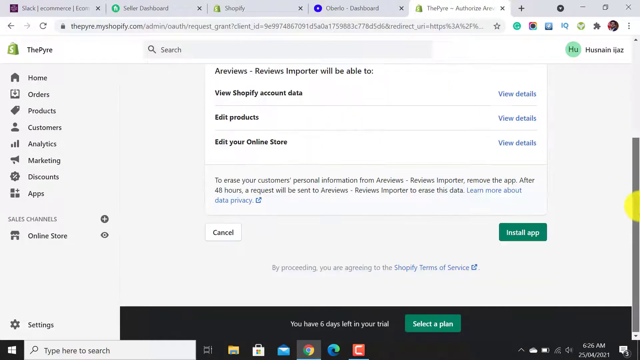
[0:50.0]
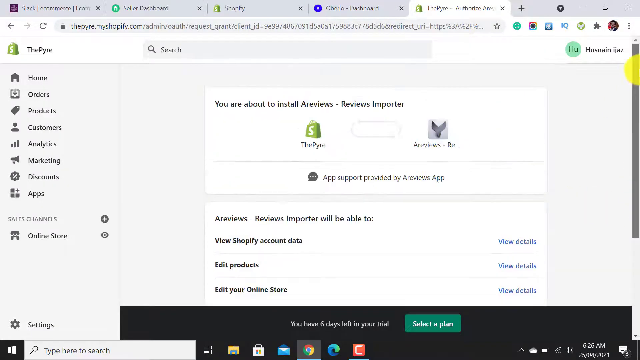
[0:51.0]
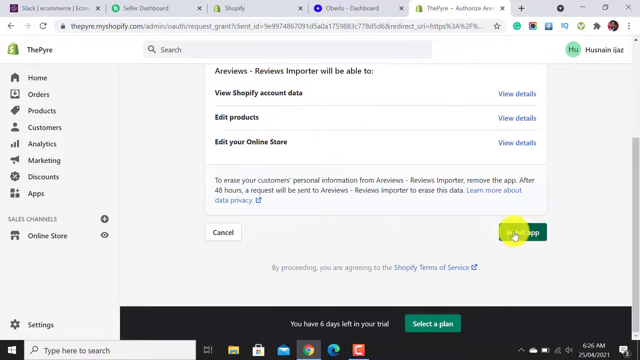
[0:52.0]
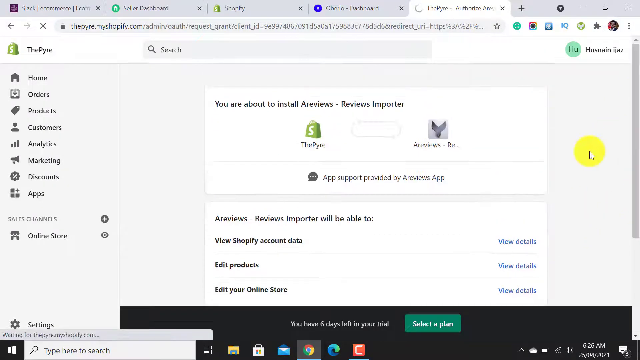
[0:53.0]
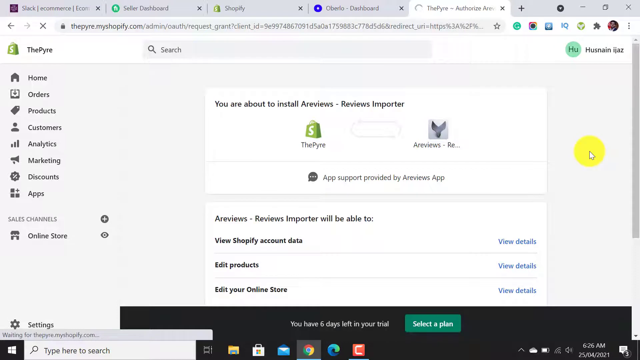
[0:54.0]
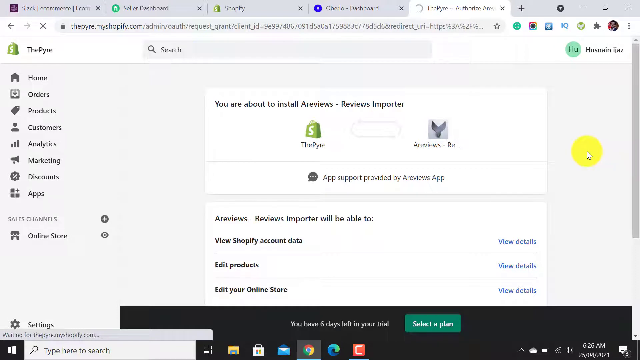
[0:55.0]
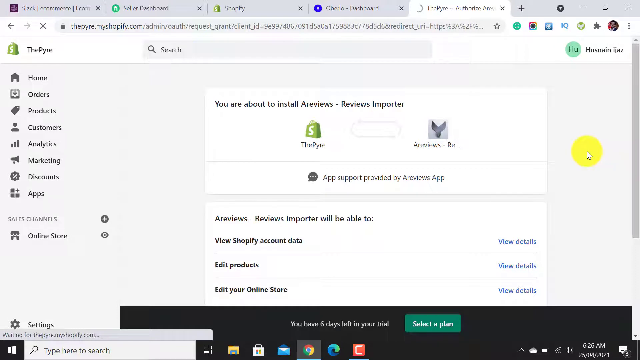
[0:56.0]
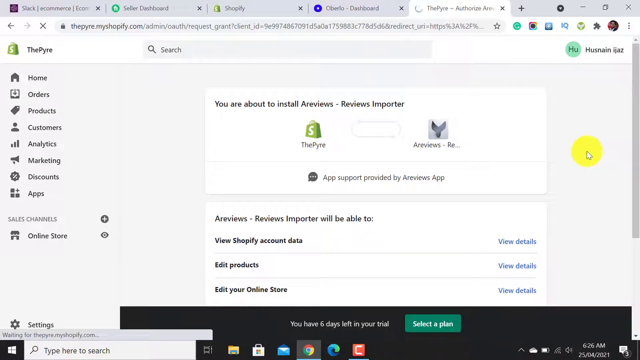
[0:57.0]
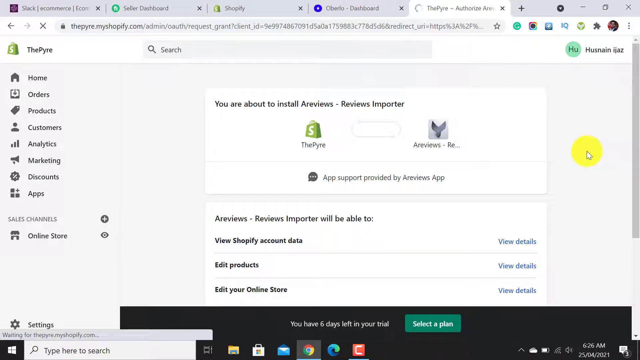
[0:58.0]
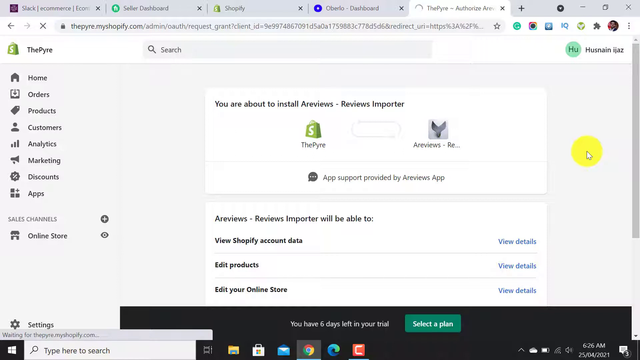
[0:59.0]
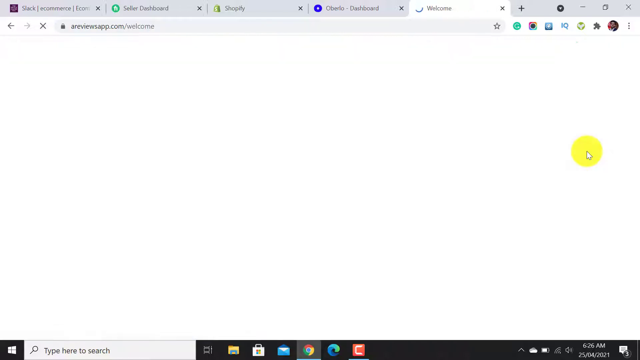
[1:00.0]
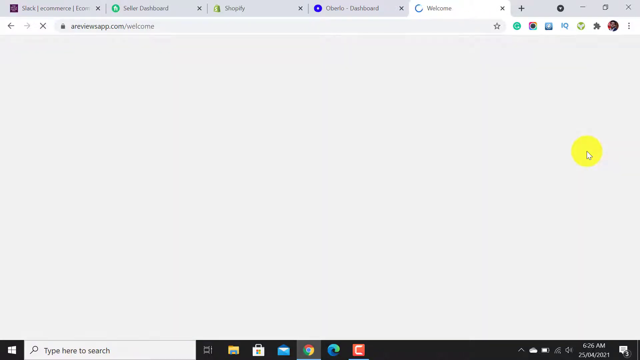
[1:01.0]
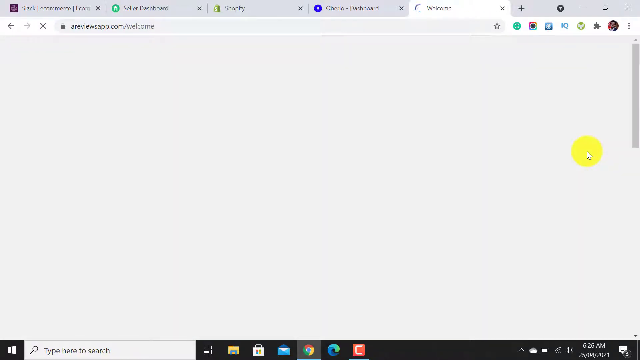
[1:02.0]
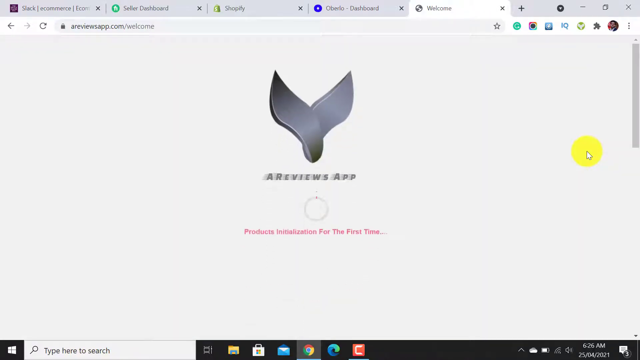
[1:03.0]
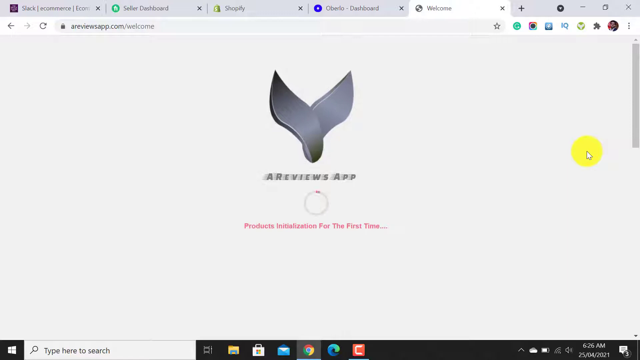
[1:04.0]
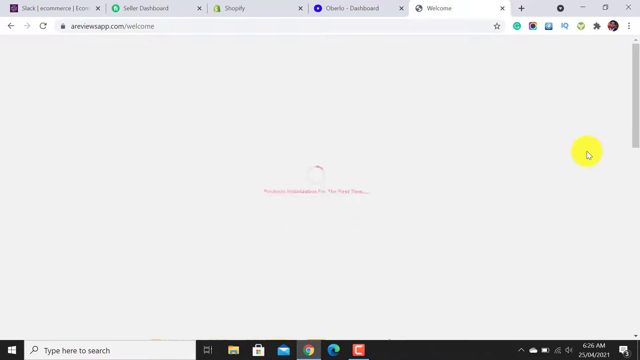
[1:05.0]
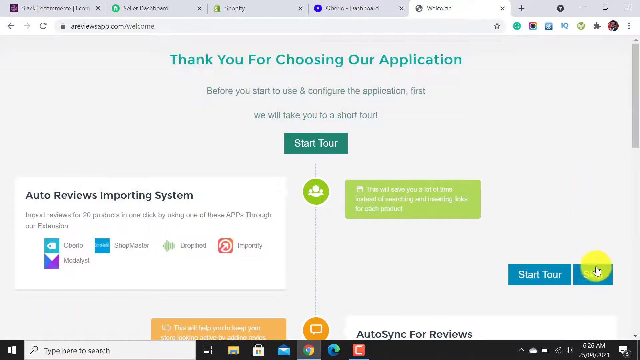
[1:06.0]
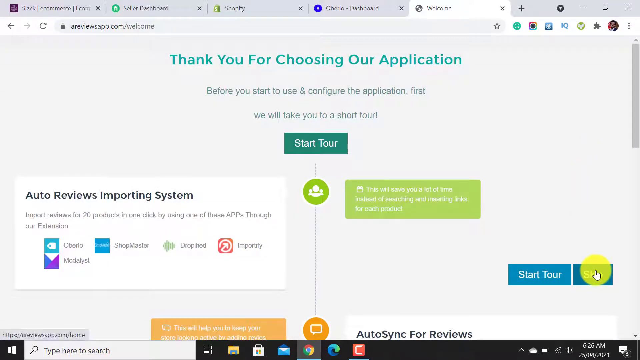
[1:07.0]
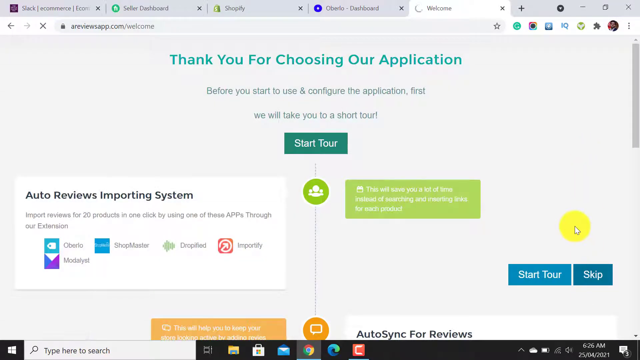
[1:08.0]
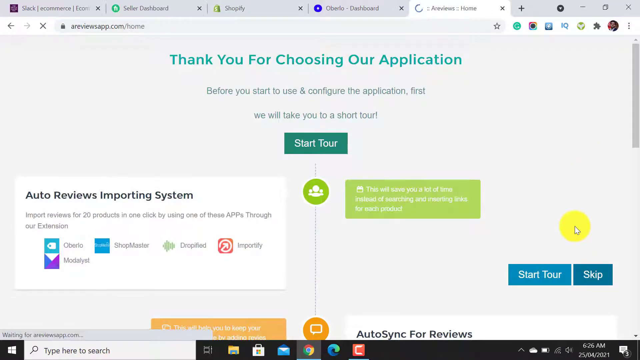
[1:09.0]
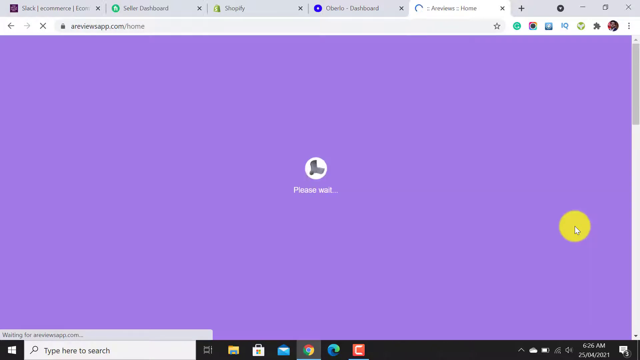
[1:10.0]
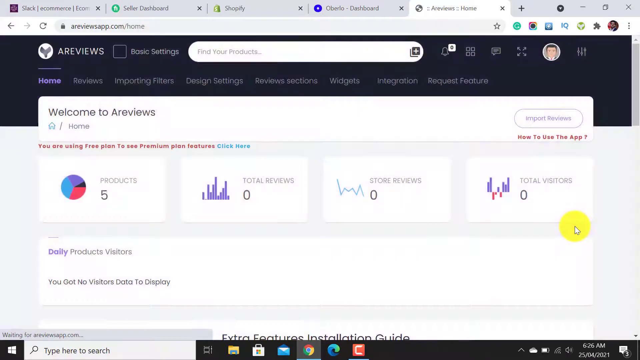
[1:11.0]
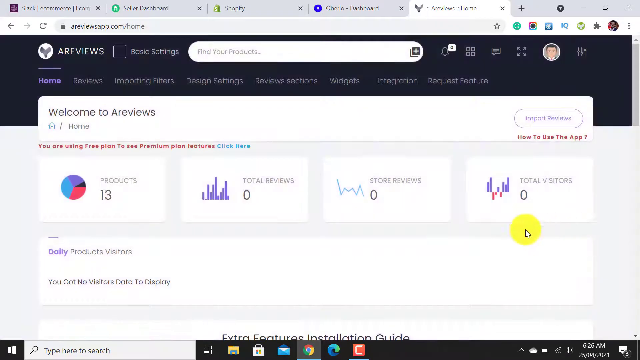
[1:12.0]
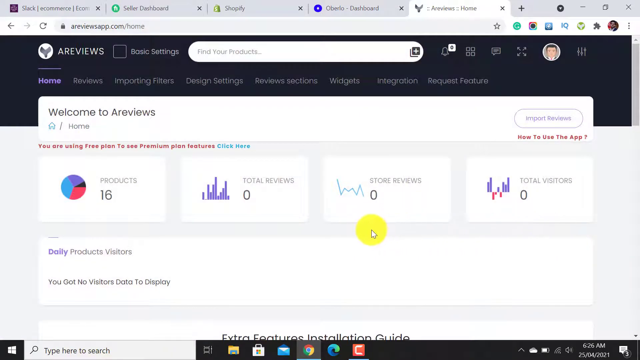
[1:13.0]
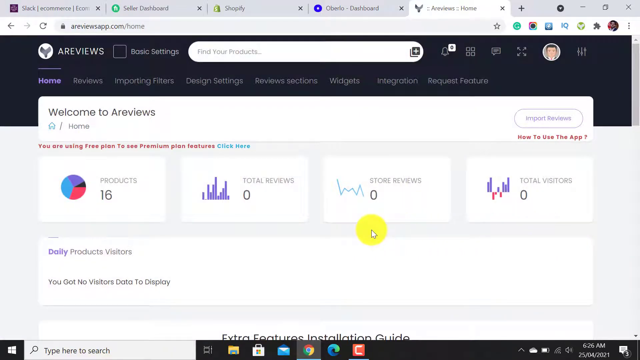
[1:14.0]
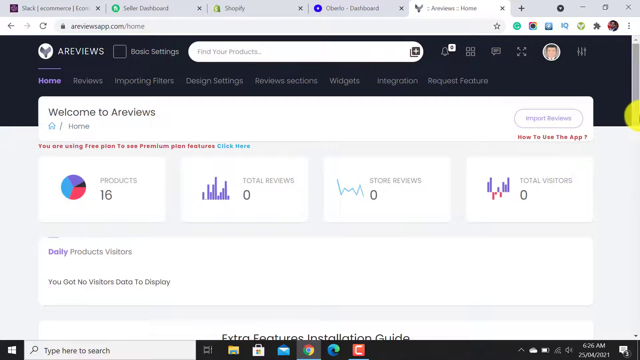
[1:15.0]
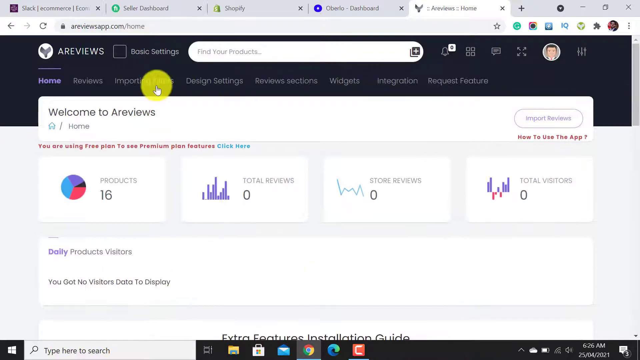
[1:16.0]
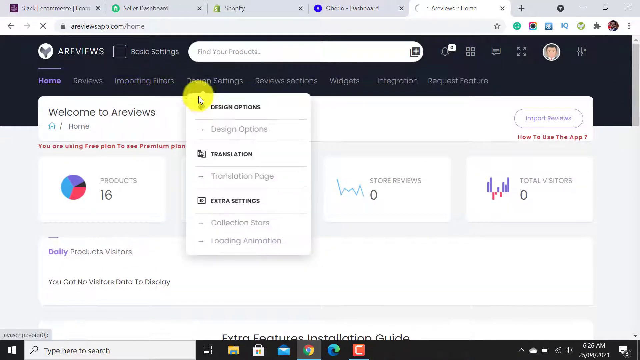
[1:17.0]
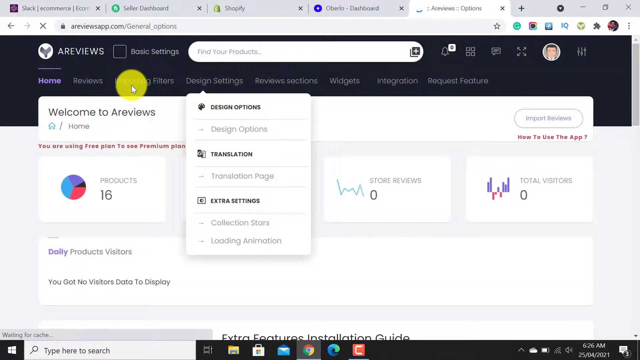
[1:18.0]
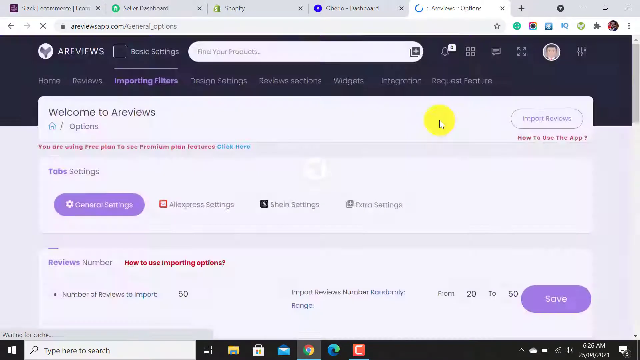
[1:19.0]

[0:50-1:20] With that window closed, the user switches to another open tab, the A reviews page, and closes it. The A reviews extension is then installed, and a message appears: "thank you for choosing the application." The extension is run to show what it can do. The A-Reviews app logo appears to be perhaps a bird, with gray wings that look very strong. The tour is skipped, and a page appears reading "you're using free plan to see premium plan features. Click here."